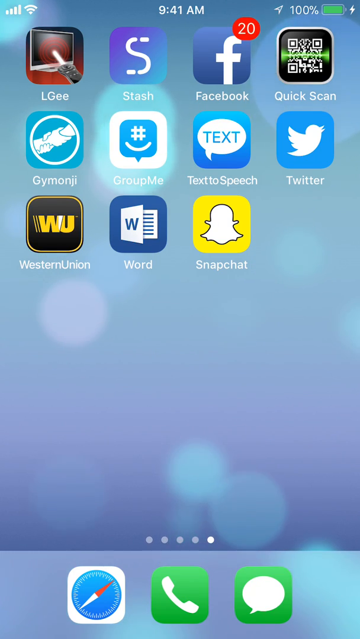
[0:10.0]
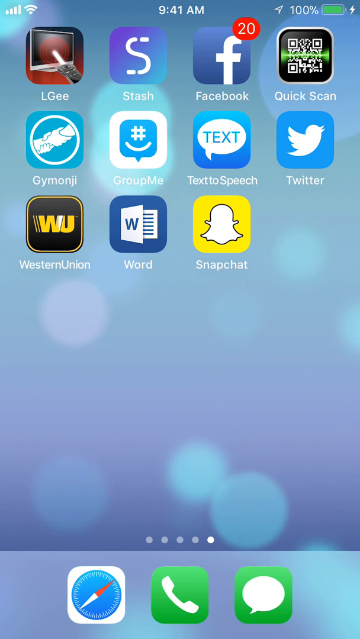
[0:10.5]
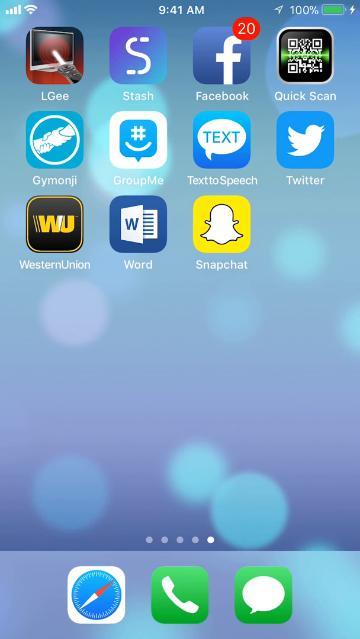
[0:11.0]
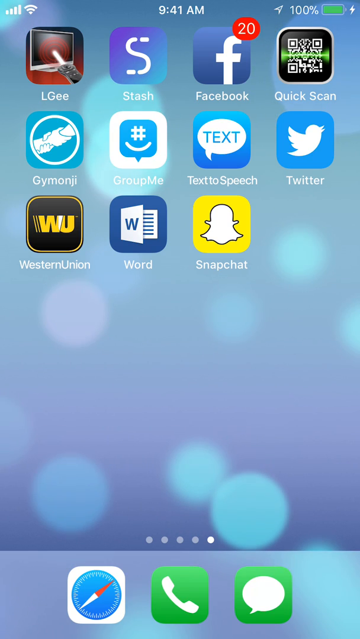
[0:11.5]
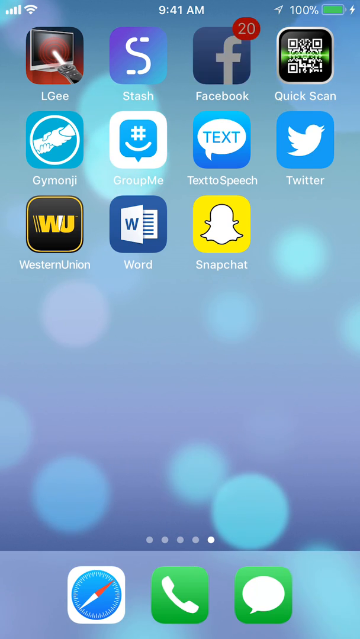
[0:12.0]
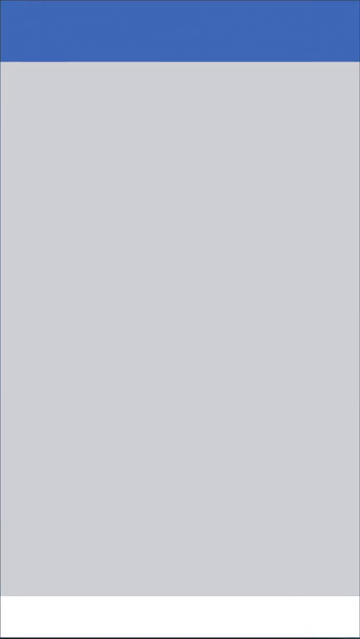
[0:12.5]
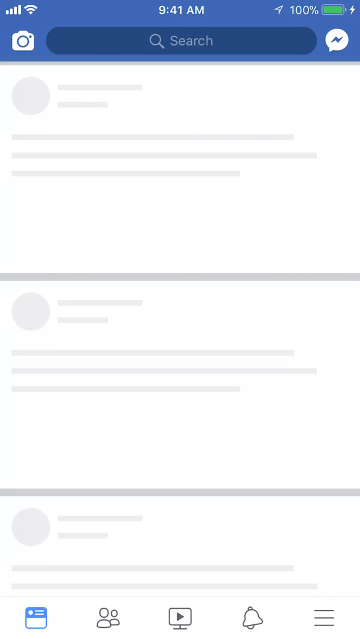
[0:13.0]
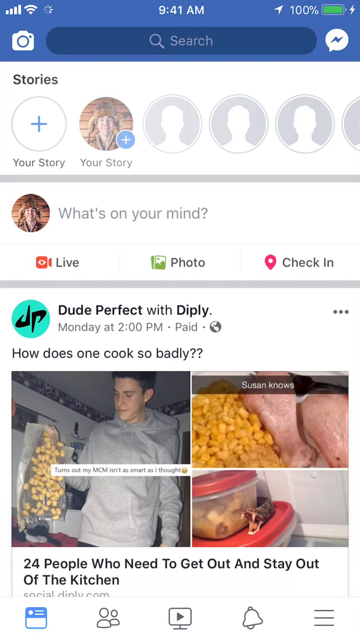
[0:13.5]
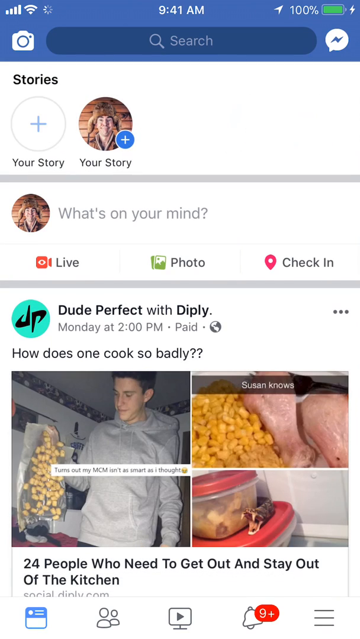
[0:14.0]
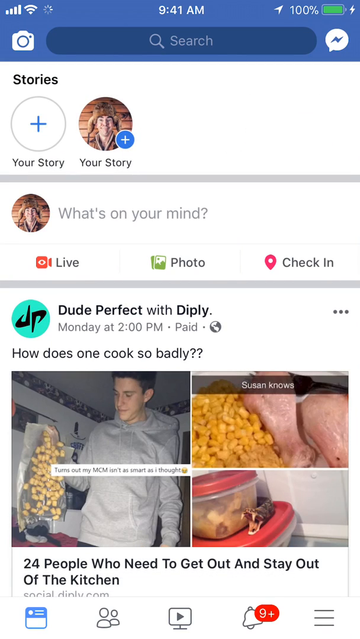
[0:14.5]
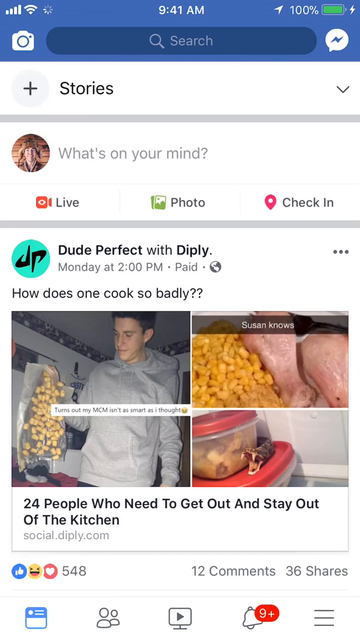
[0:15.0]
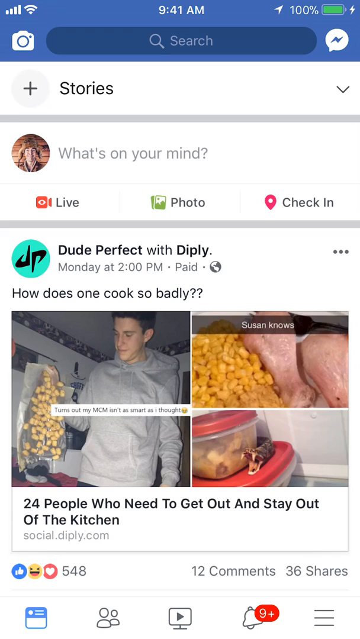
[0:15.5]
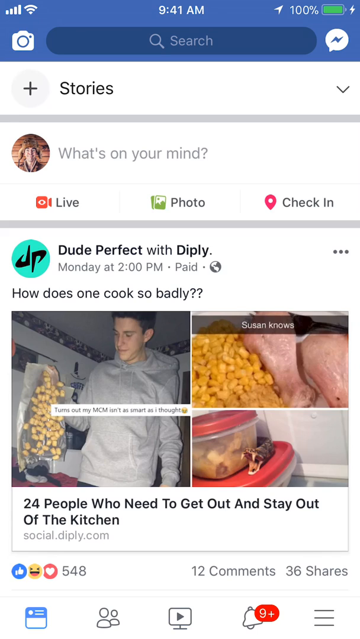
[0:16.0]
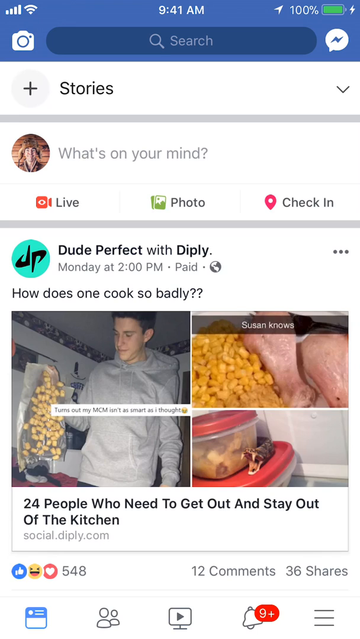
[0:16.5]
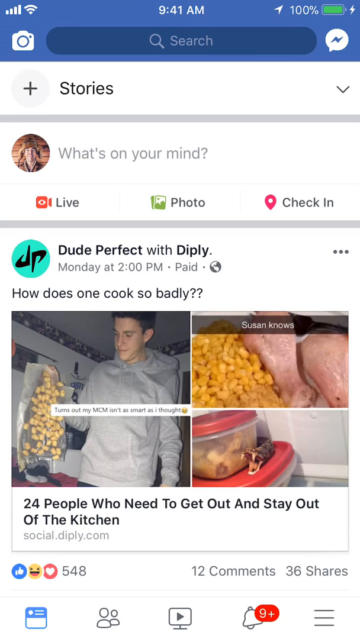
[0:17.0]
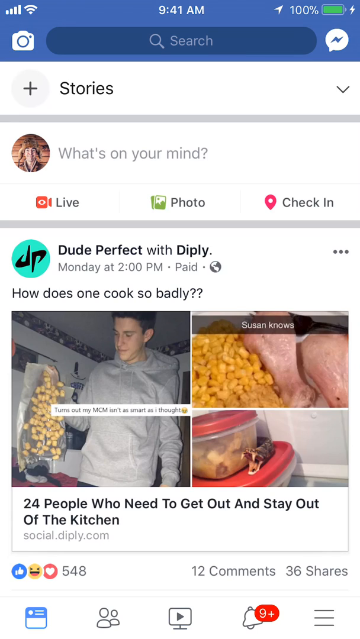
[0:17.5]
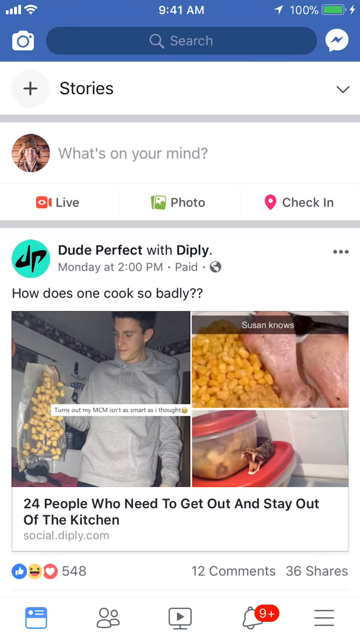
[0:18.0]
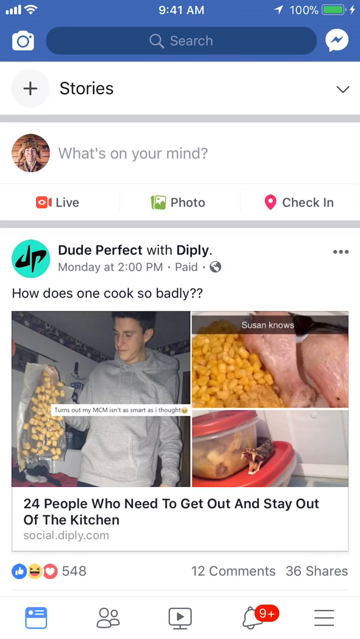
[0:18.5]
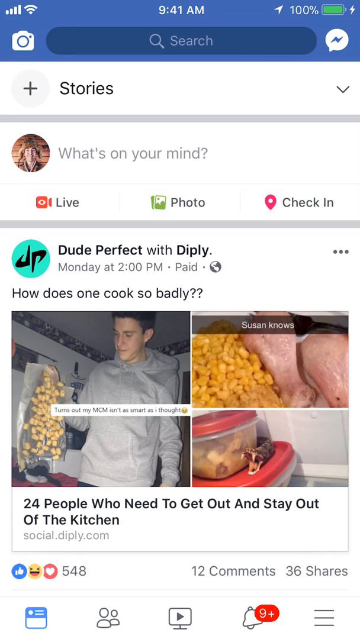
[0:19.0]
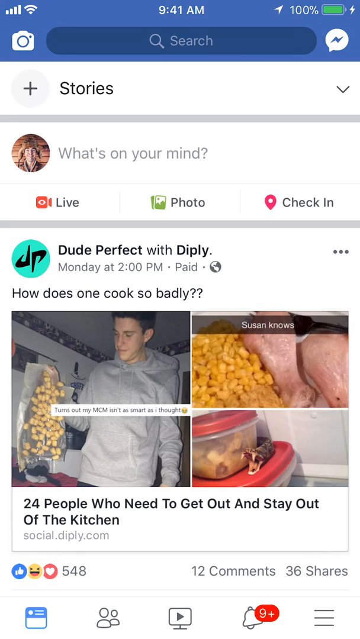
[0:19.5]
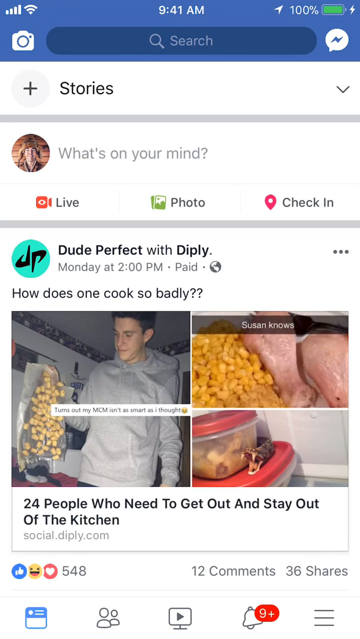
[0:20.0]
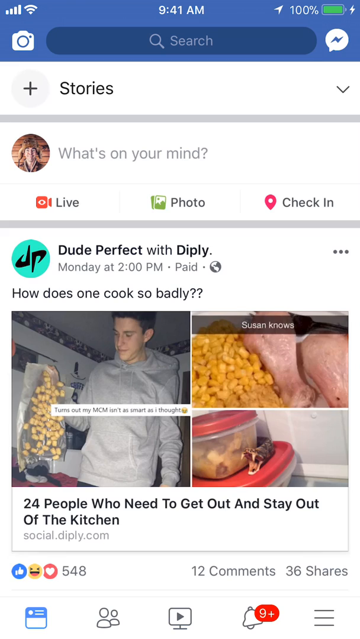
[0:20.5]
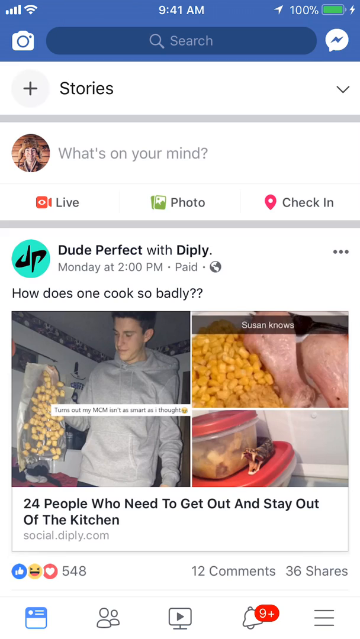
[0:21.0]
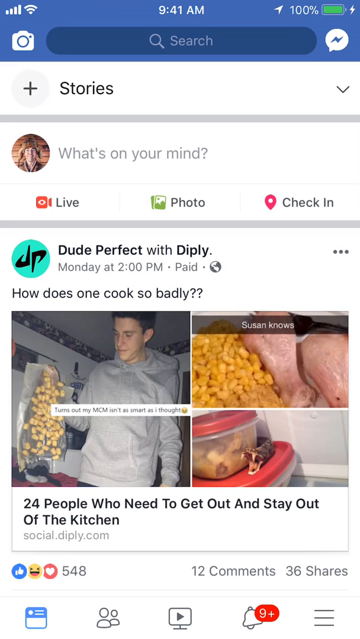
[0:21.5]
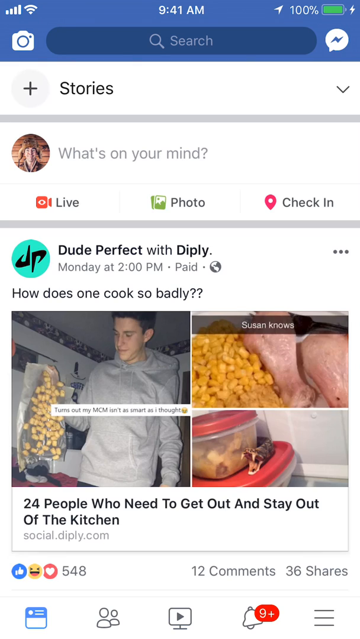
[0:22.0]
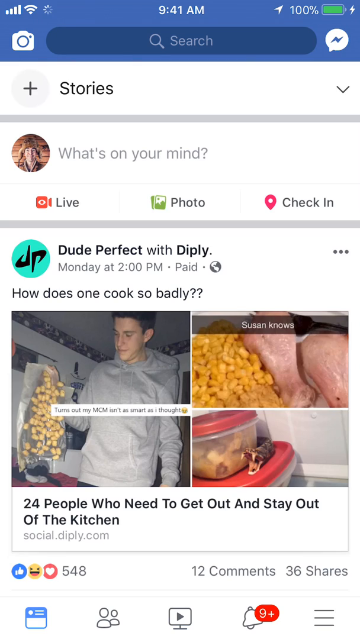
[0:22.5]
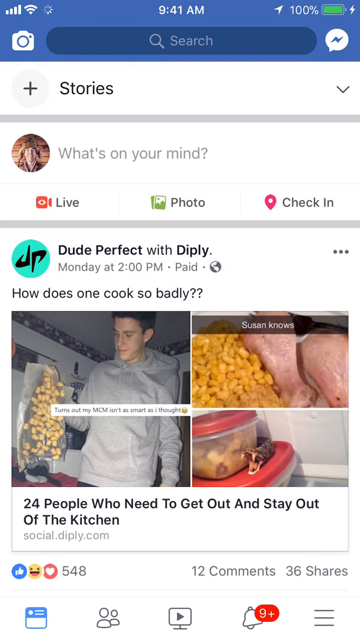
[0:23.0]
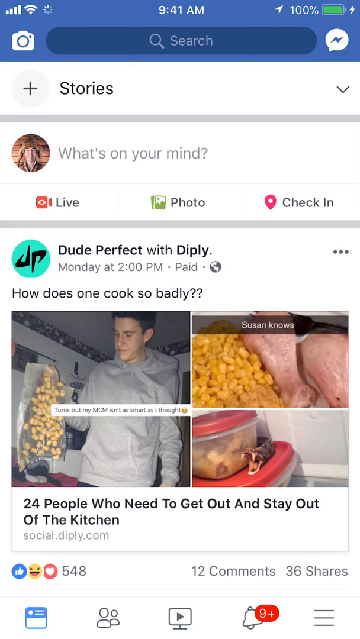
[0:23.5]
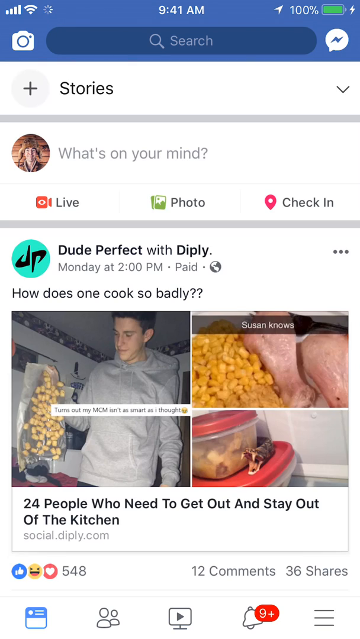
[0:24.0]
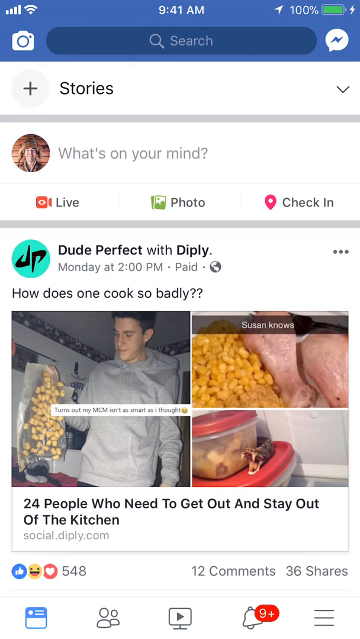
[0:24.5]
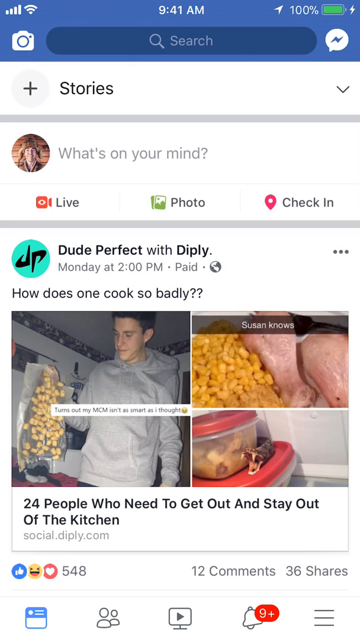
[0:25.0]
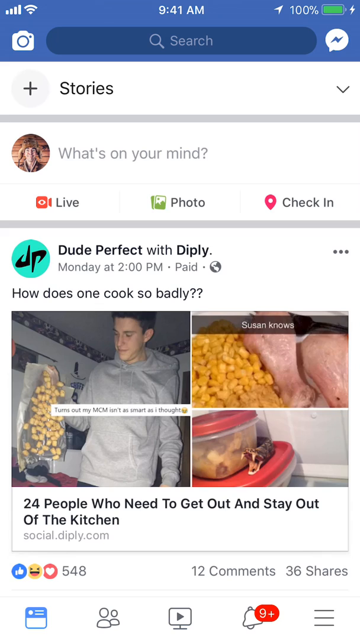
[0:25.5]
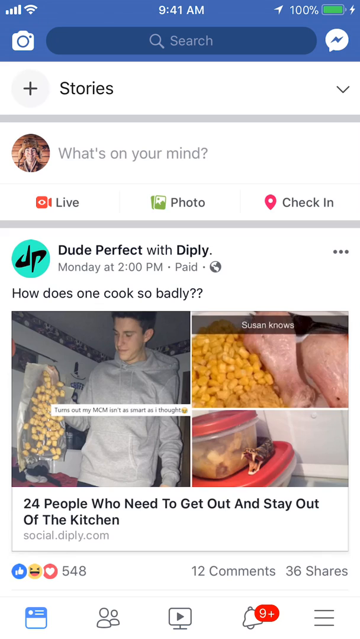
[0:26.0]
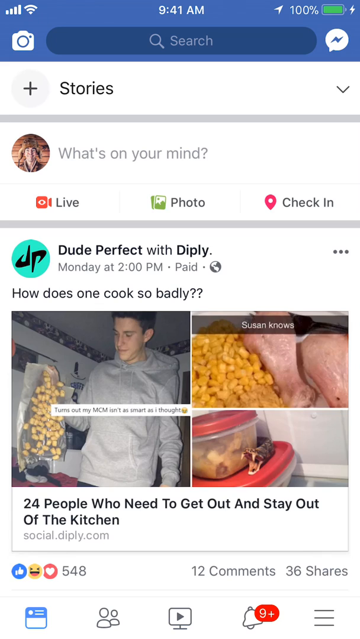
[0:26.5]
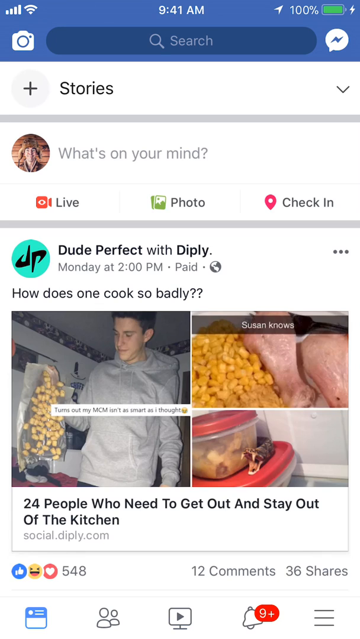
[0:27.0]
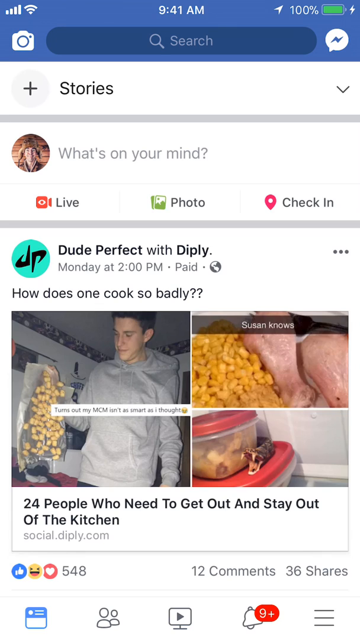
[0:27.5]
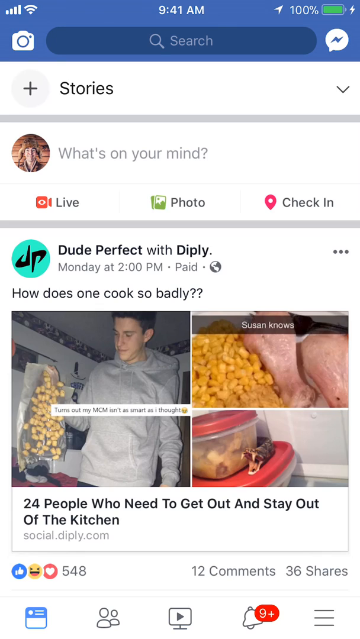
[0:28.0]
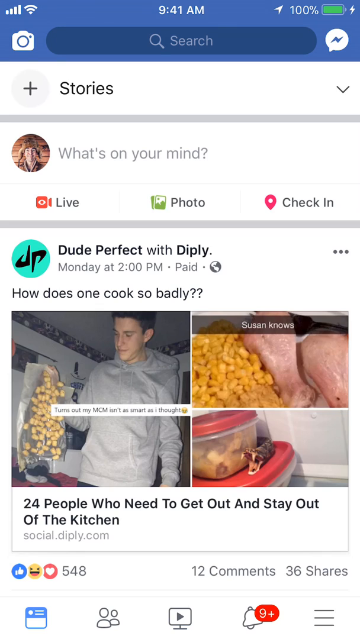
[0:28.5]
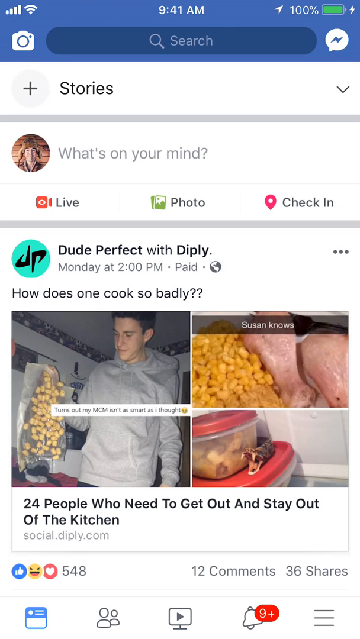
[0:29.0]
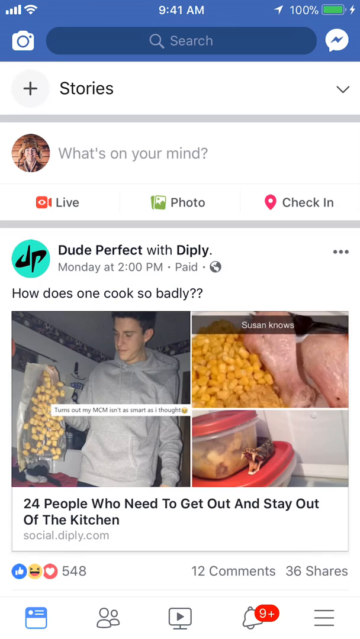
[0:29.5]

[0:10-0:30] On the same phone, an app is opened, showing stories and a post from "Dude Perfect with Dipley" with a DP icon. The post reads "How does one cook so badly? 24 people who need to get out and stay out of the kitchen." It is dated Monday at 2 p.m. and says "paid", apparently marking it as a paid promotion. There is a search bar at the top, and the top of the screen is very blue; the app is some kind of social media. The post apparently comes from social.dipley.com, and it has 12 comments, 36 shares and 548 emoji-style likes.